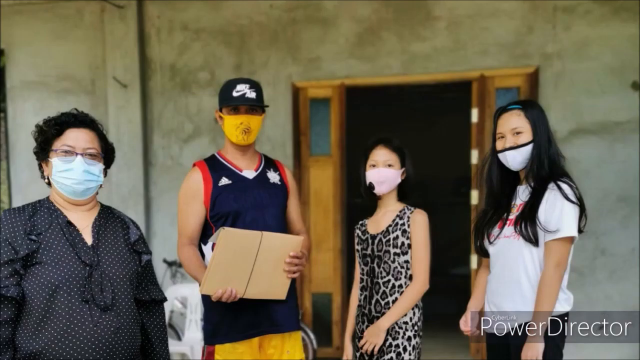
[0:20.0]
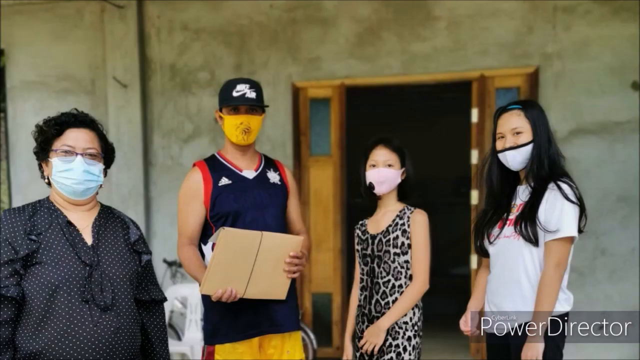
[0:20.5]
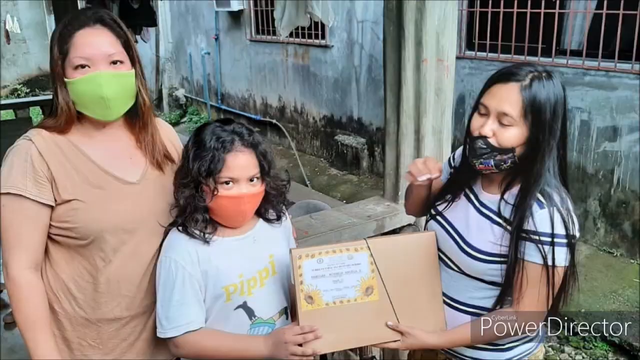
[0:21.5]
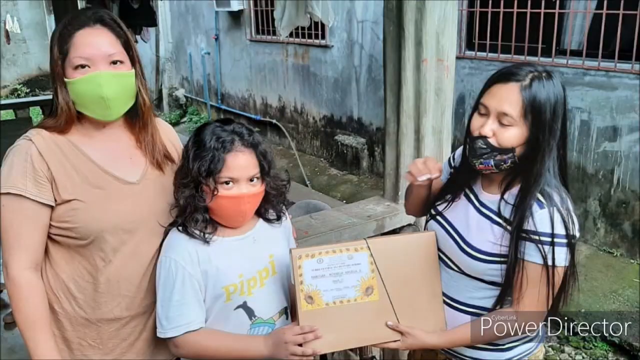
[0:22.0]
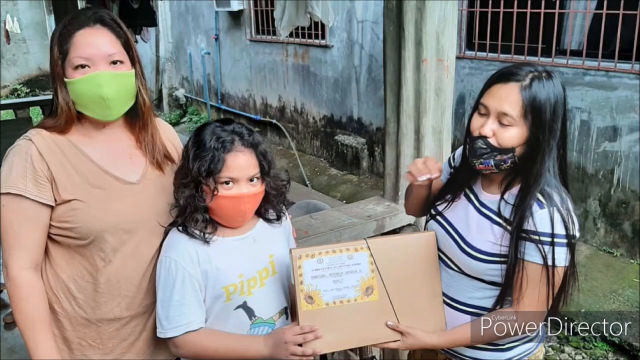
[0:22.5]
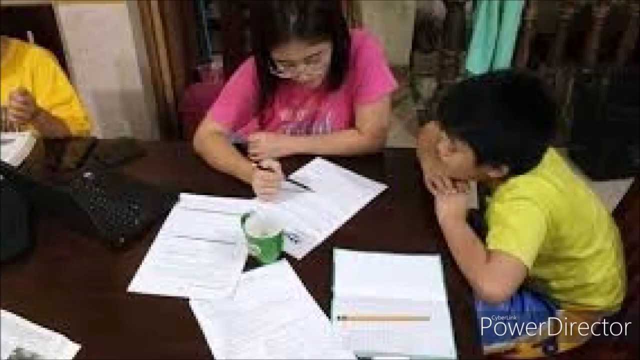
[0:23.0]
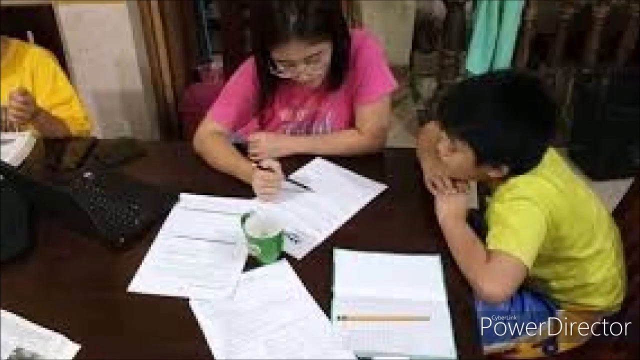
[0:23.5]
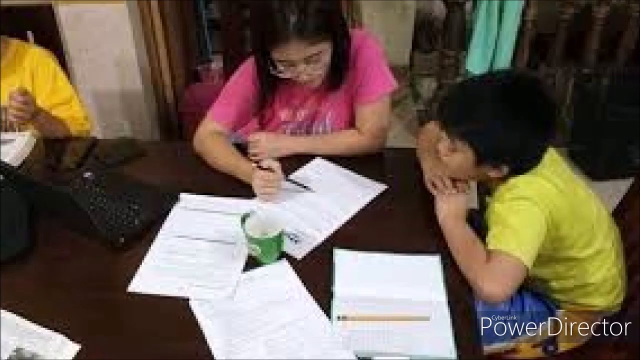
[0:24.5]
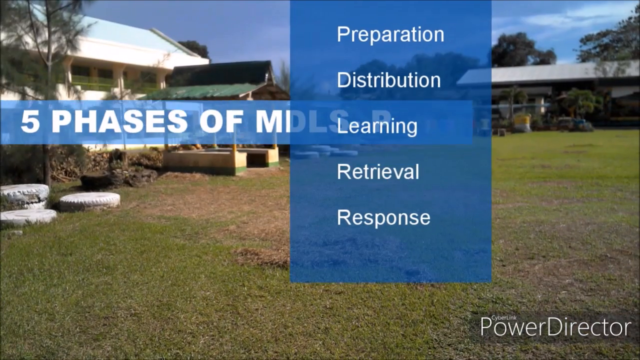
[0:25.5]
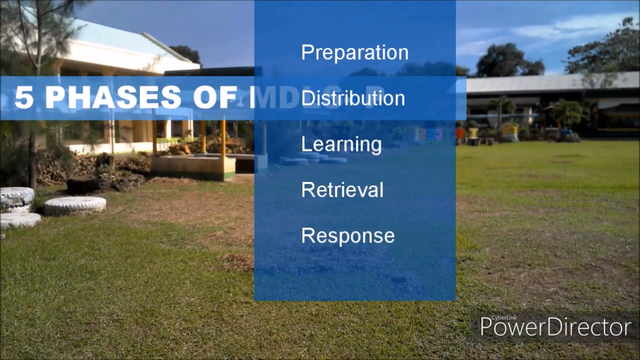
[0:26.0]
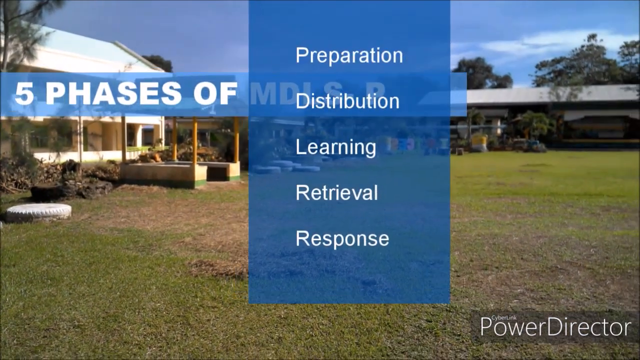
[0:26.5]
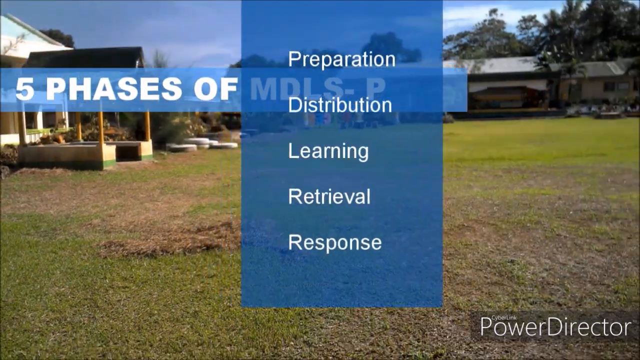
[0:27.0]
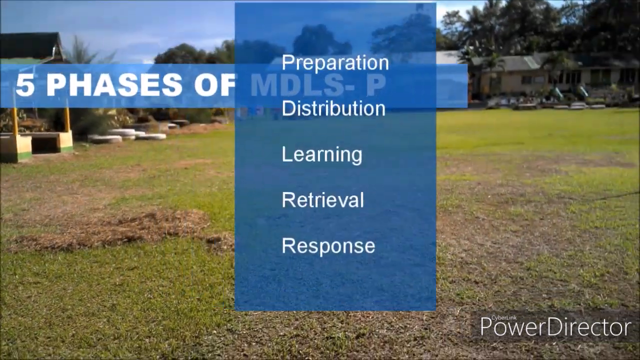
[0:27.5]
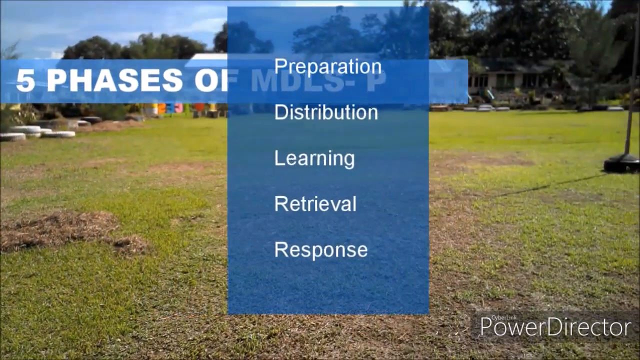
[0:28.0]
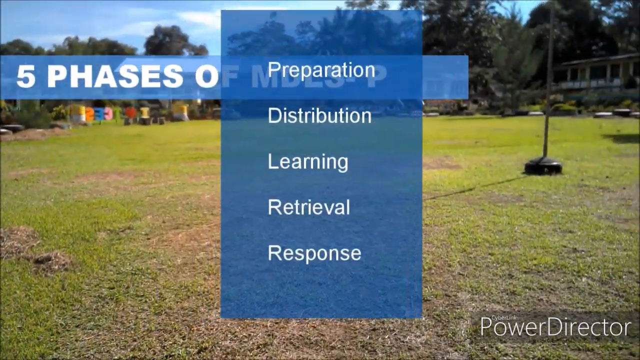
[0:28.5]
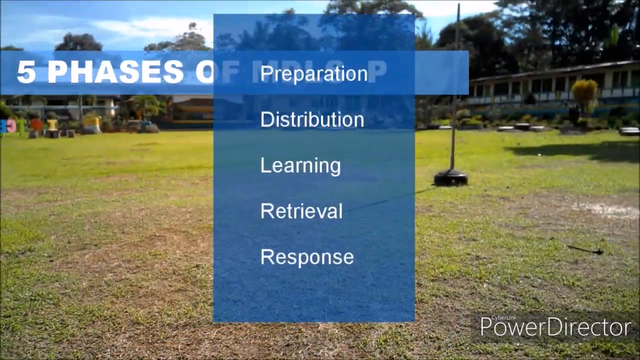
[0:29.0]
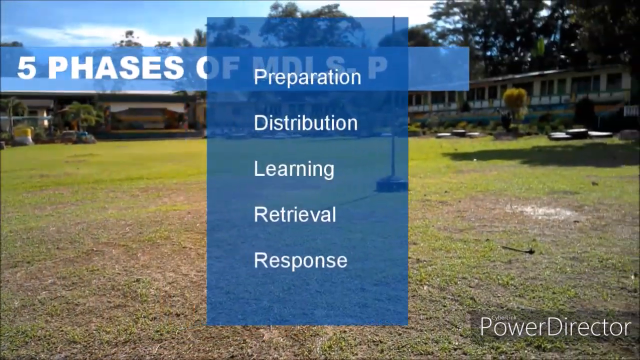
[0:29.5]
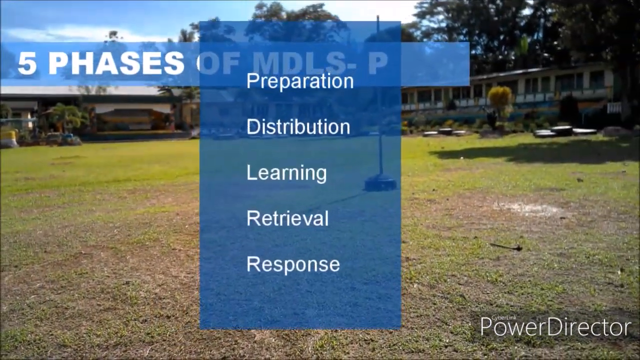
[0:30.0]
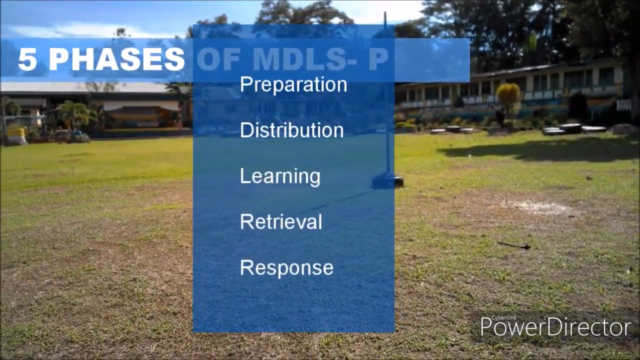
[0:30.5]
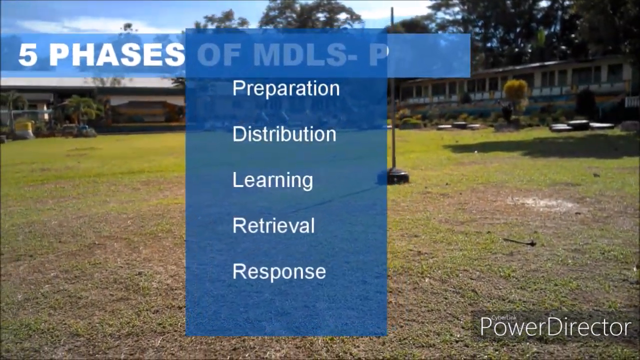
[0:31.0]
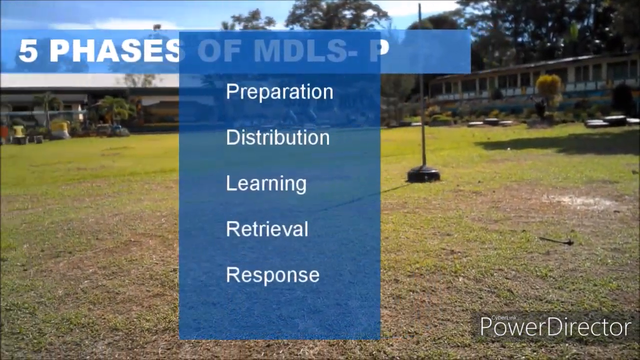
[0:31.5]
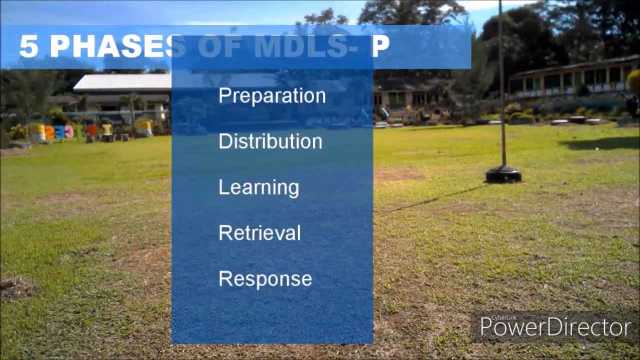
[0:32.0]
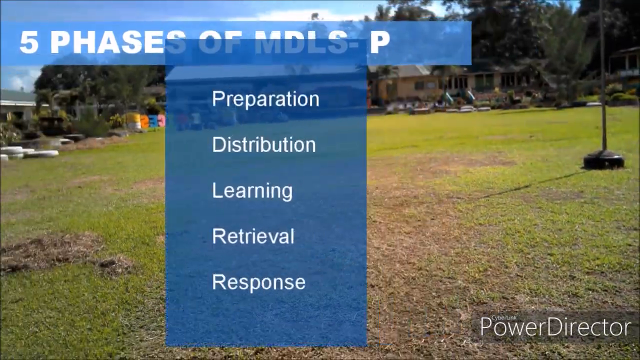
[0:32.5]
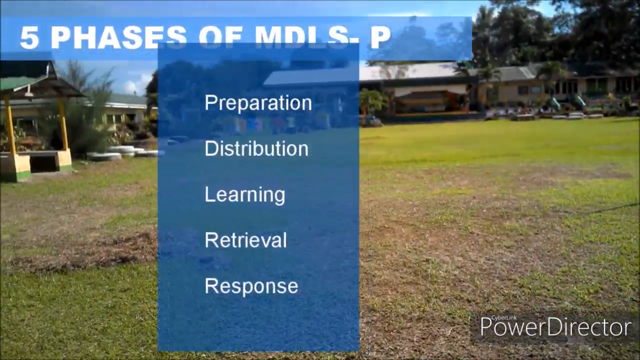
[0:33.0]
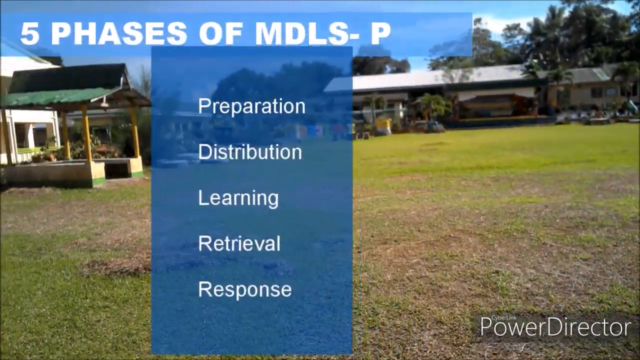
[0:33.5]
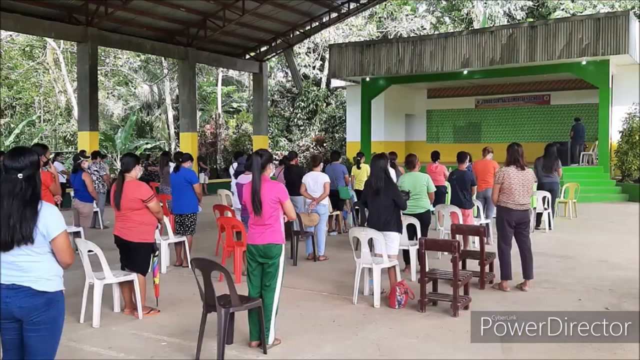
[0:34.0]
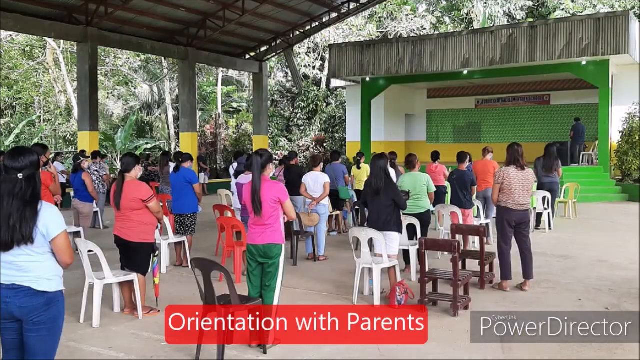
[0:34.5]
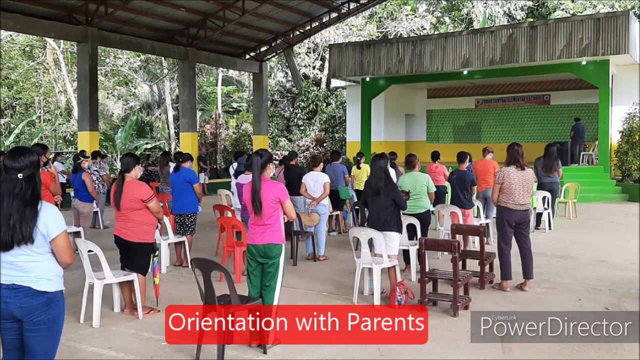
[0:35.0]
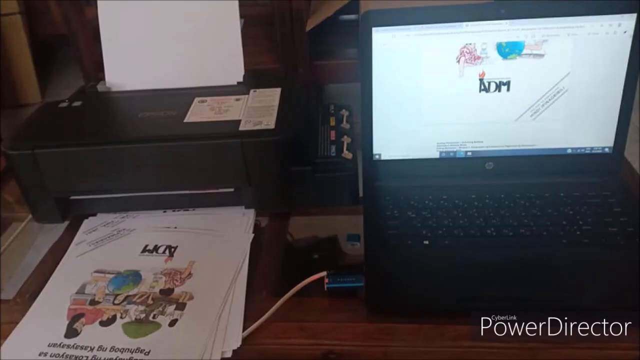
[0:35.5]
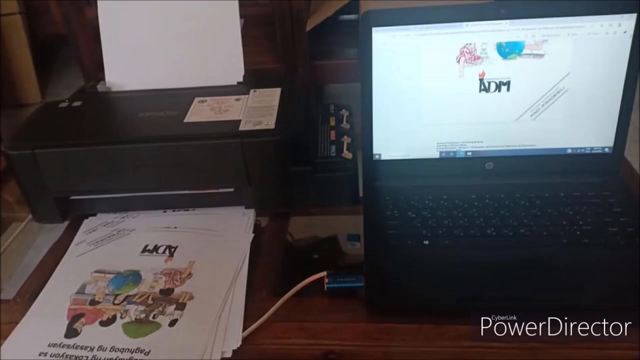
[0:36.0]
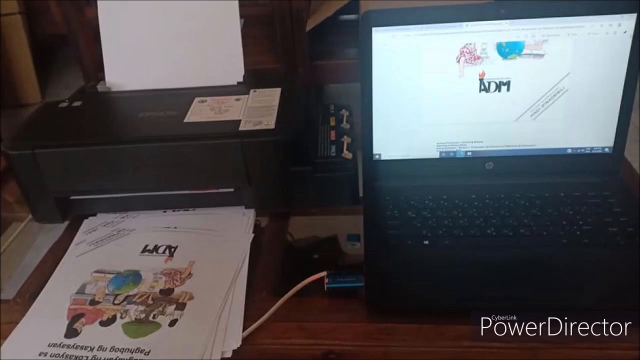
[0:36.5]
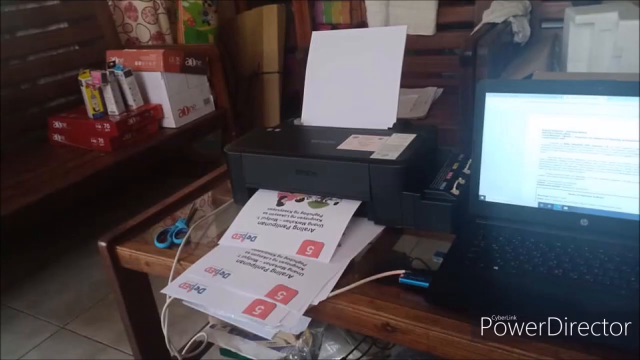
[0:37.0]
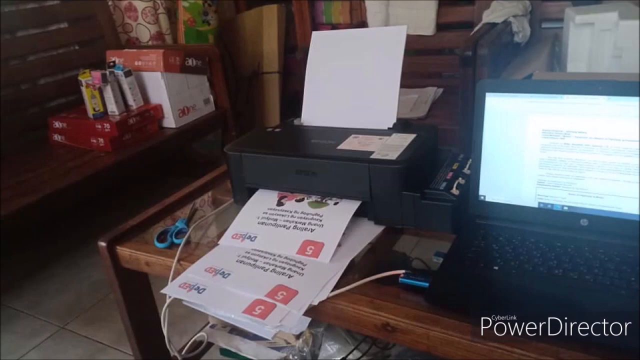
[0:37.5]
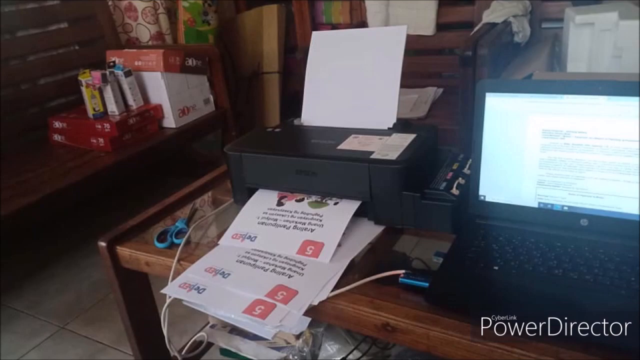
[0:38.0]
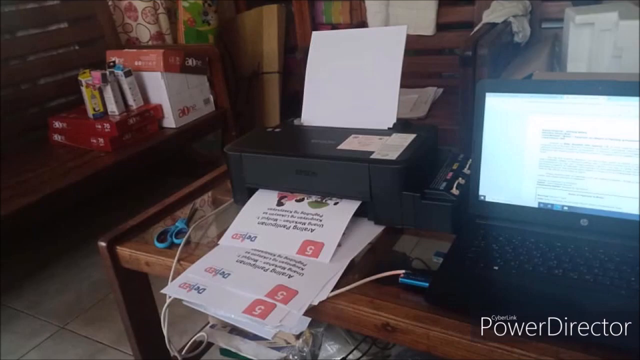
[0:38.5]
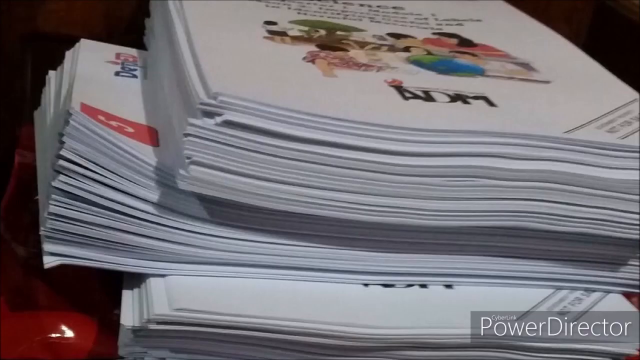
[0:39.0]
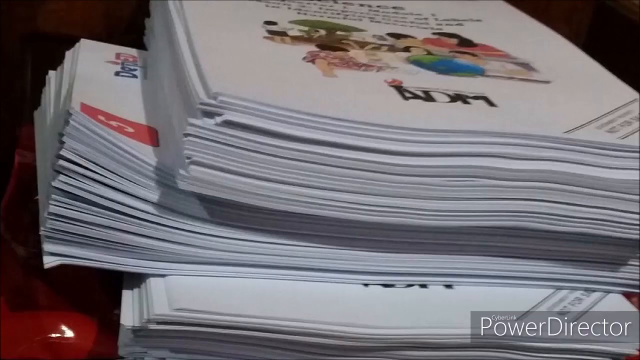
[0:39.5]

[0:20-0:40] Four people in masks are in front of a doorway: a lady on the left with short black hair, a man in a jersey and a Nike Air ball cap with a yellow mask who holds some sort of cardboard, a small lady in a leopard print dress, and a slightly taller lady in a white t-shirt. The video then moves through several pictures. One shows a lady in a green mask next to a child in an orange mask and another lady in a multicolored mask; they appear to be holding a cardboard envelope. The building in the background is very dilapidated, with rag curtains and gray, dirty walls. Another image shows a girl in a pink shirt and a boy in a yellow shirt looking together at a paper, the girl pointing at it with her pencil. Next, an outdoor courtyard area appears with the text "five phases of MDLS" and "Preparation, Distribution, Learning, Retrieval, and Response" in white on a semi-transparent blue overlay; the camera scans across the courtyard as the text moves around the screen. An outdoor gathering area follows with the text "orientation with parents" at the bottom. The chairs are distanced from each other, and probably 20 to 30 people watch a green stage with a single person on it. Then a room with a printer and a computer on the desk is shown, and the camera shows a stack of papers.